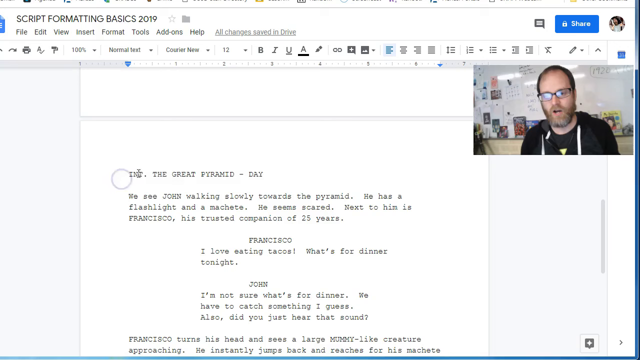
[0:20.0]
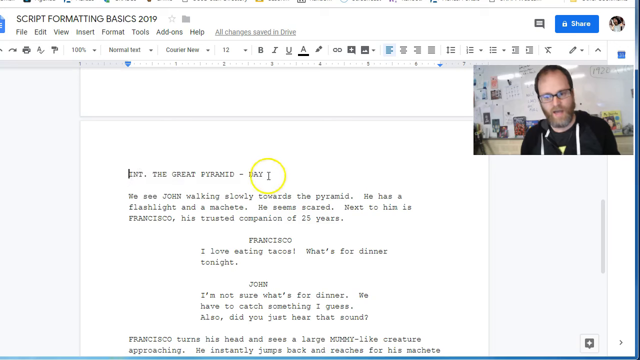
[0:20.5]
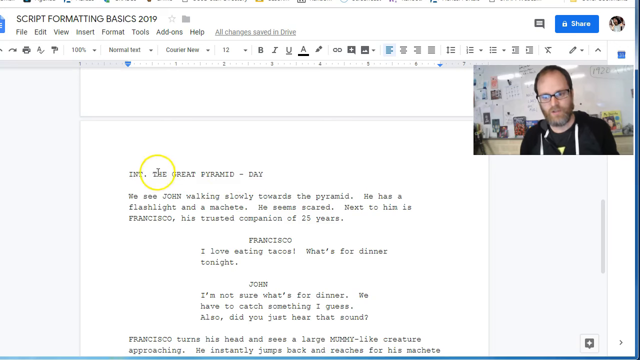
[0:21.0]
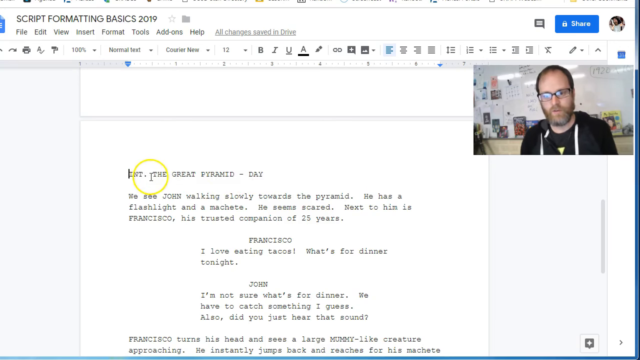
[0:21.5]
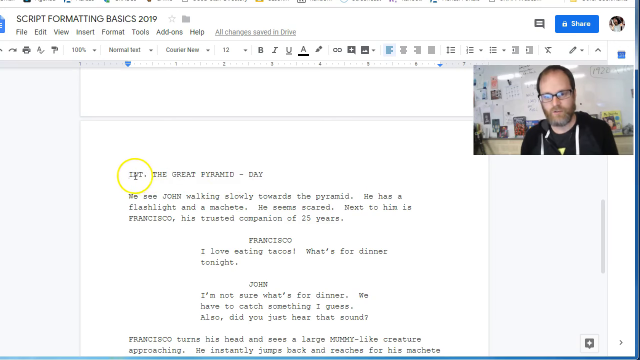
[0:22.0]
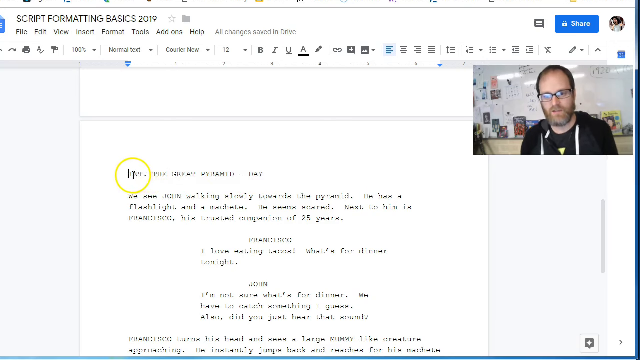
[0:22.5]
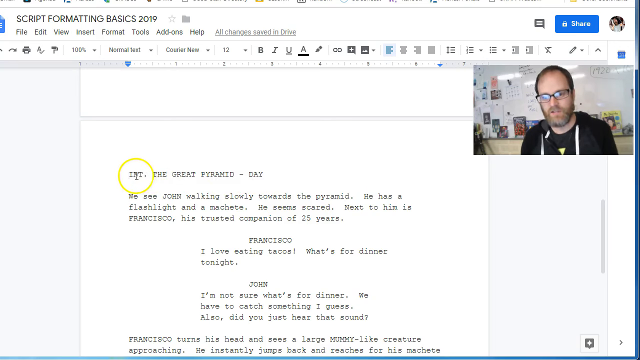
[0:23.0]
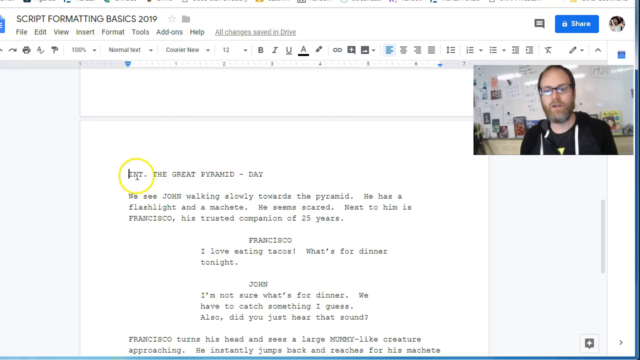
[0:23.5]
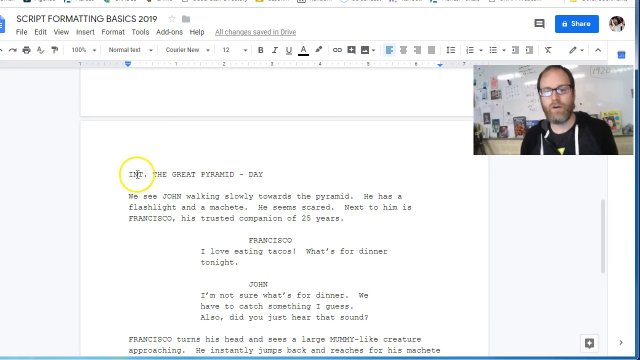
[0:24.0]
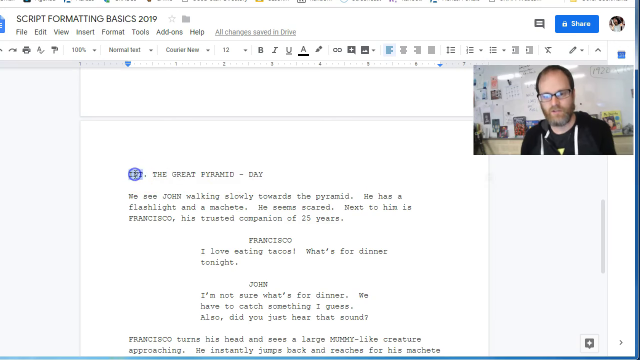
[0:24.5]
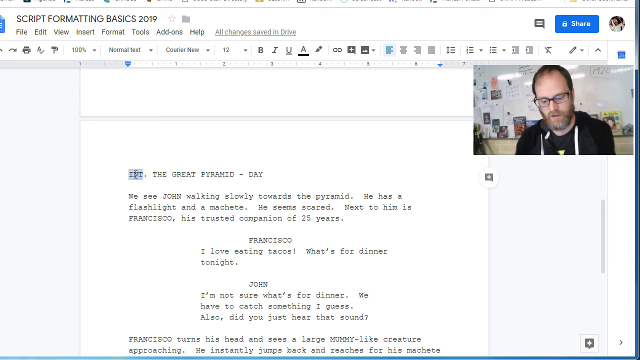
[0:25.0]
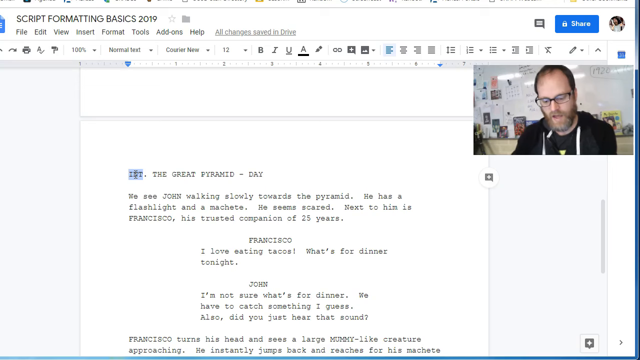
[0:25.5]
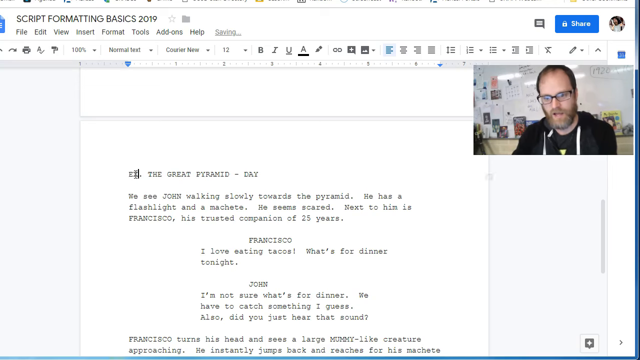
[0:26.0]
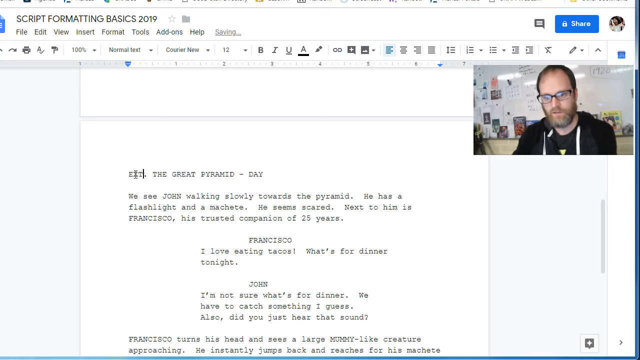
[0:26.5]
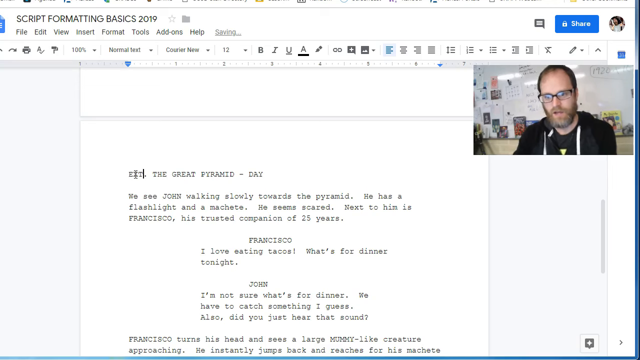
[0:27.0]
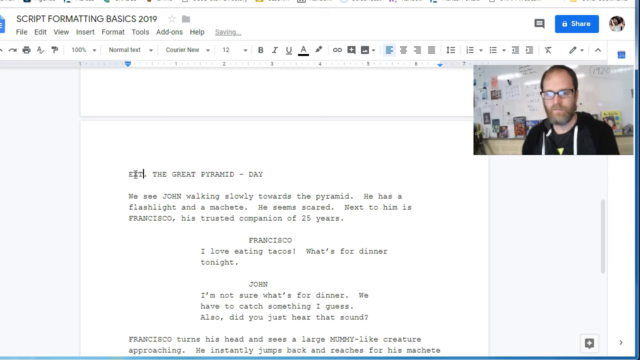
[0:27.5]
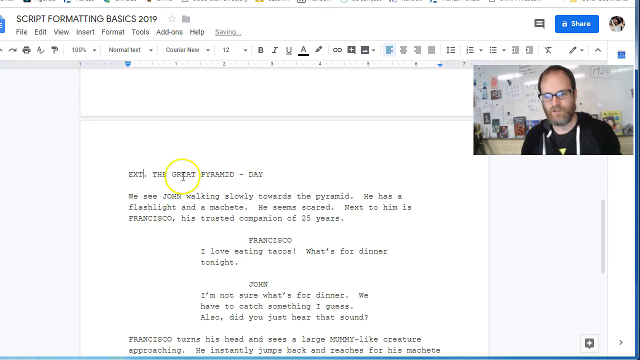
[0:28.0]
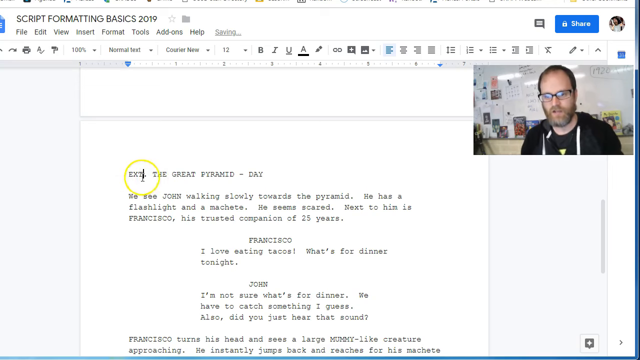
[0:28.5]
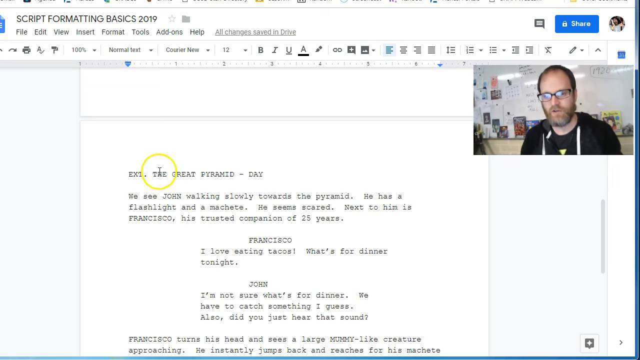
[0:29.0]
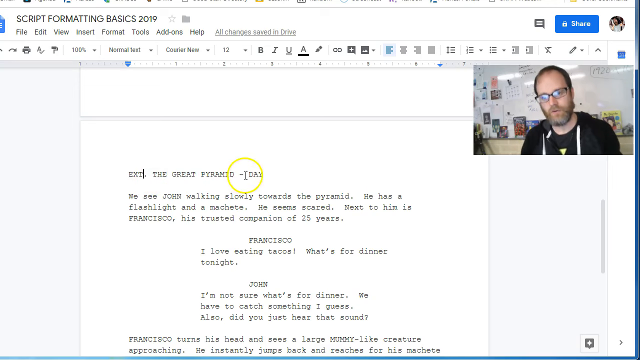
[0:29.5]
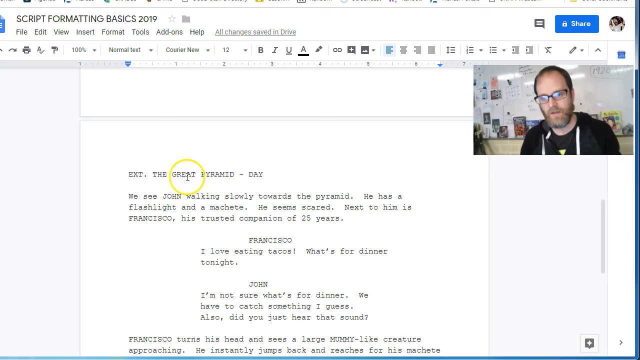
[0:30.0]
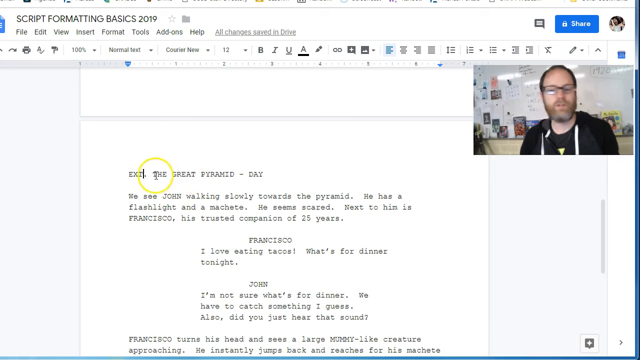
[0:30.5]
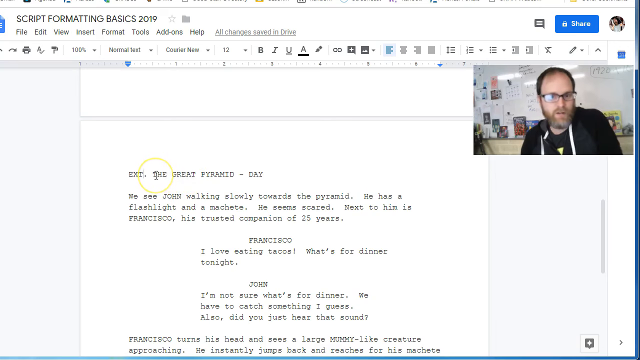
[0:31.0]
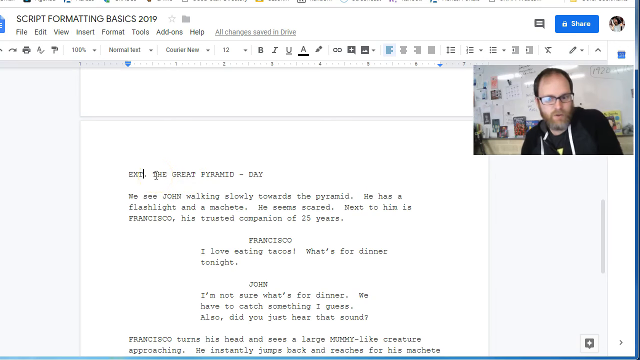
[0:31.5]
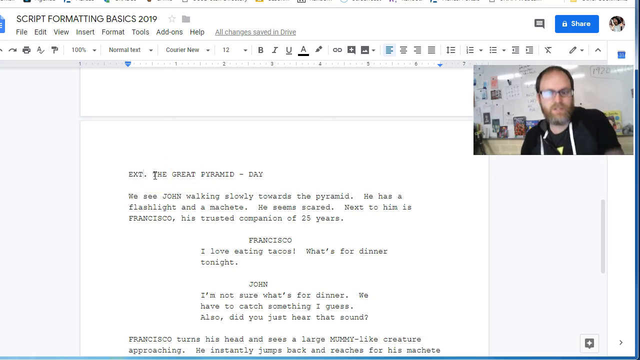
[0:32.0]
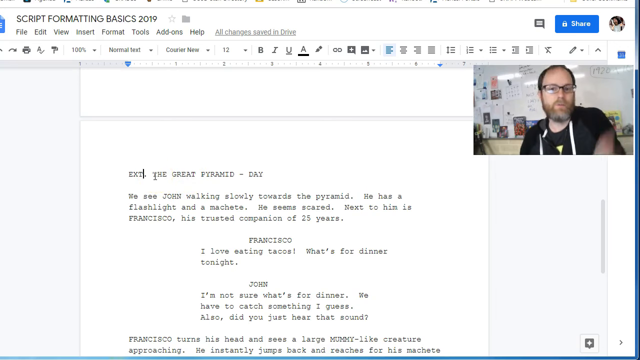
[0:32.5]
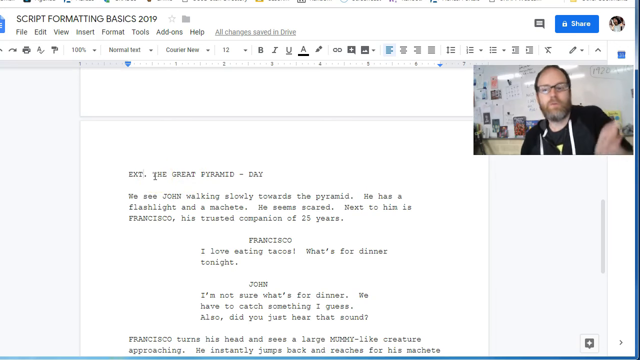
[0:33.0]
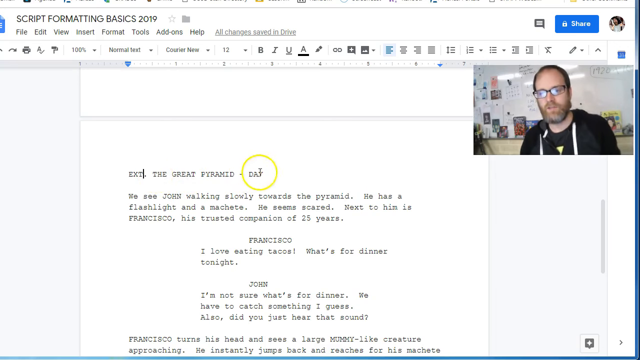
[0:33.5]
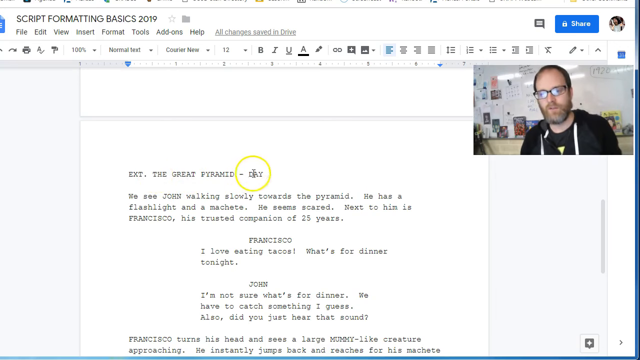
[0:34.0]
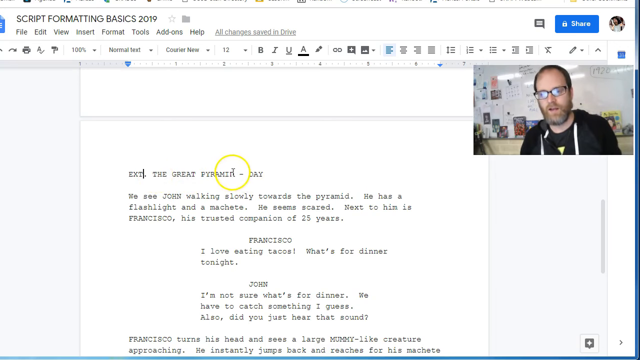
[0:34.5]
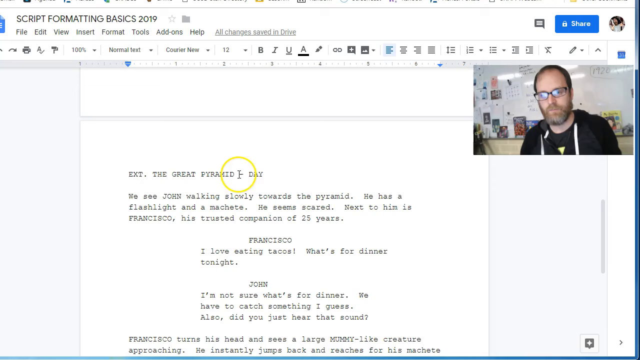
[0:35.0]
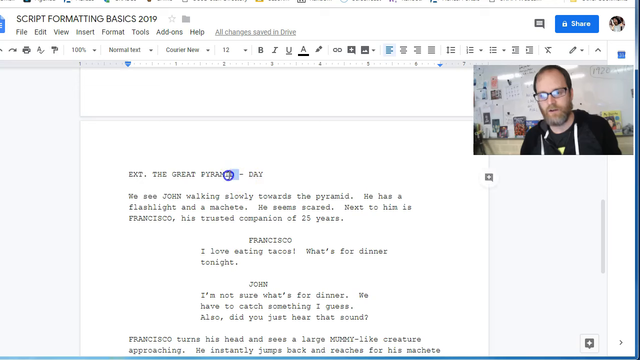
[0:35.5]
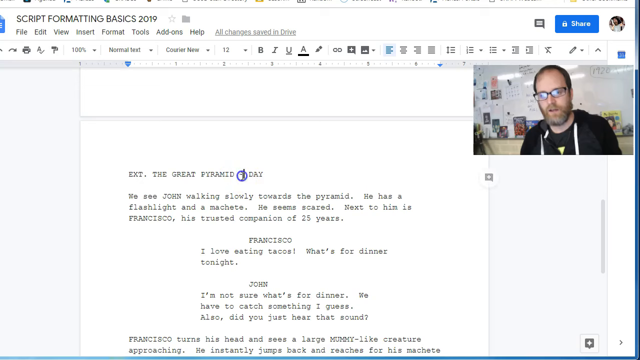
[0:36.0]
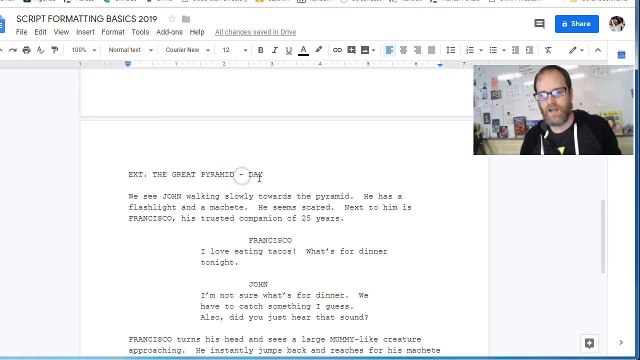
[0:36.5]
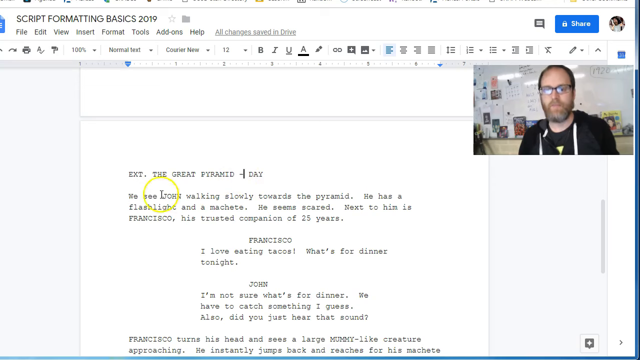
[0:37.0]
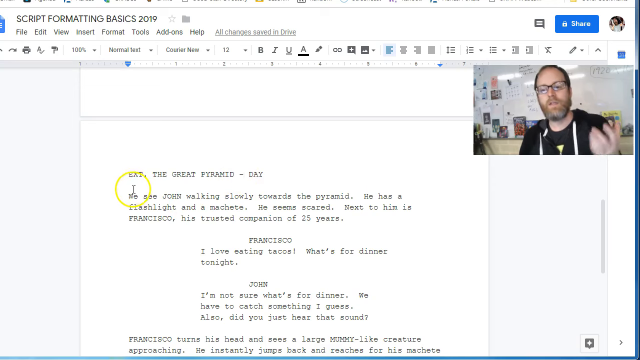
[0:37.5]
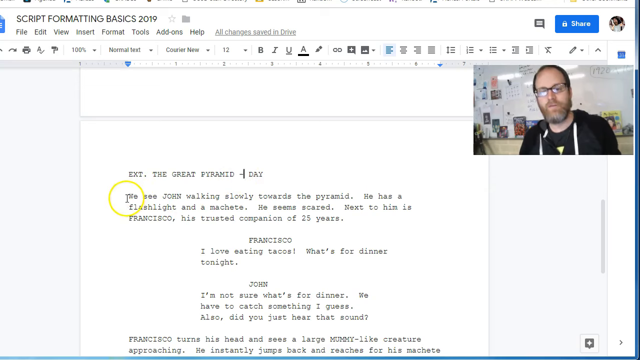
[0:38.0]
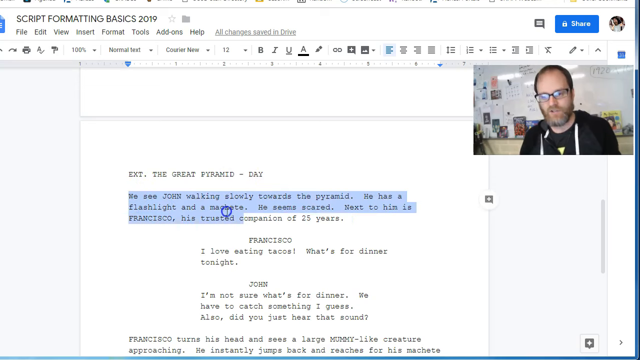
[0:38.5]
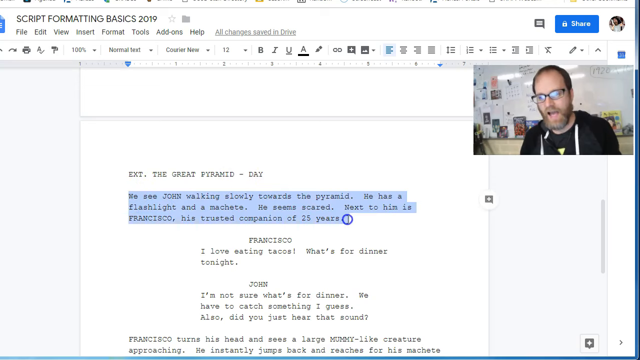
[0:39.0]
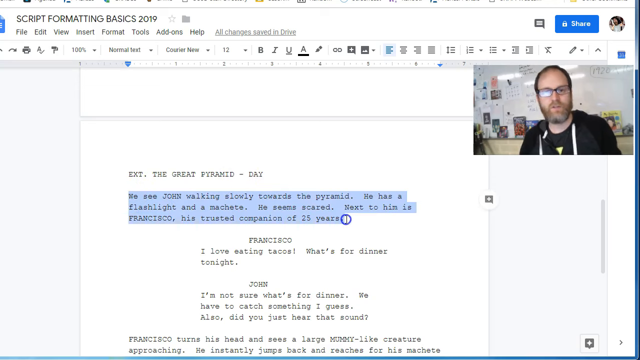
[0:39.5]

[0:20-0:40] The man speaks while tilting his head down slightly. Under his black hoodie is a black shirt with what looks like a yellow triangle; the hoodie is slightly unzipped, showing the top of the shirt, and either white drawstrings or two white vertical lines come down from the jacket. He keeps going back to "int", double-clicks it, and replaces it with "ext". Whenever he moves the cursor, it looks like an eye with a yellow circle around it. He gestures with a karate-chop motion of his left hand in front of him, chopping as he explains each word. He then highlights the part right underneath the Great Pyramid, which reads "we see John walking slowly towards the pyramid", holds it for a moment, and clicks off. The page number is not visible, but the view is on at least the second page since there is a page above it. On the right, a gray vertical rectangular bar shows progress, apparently about midway down the document, suggesting there may be one more page.